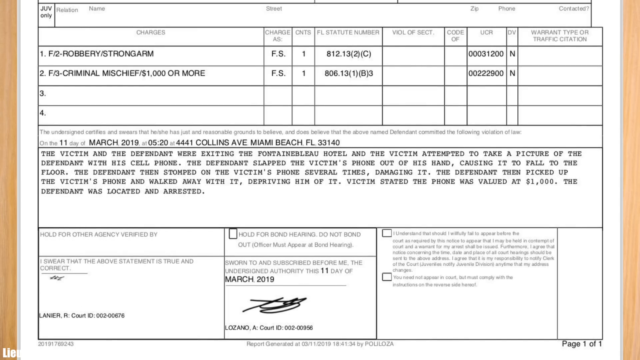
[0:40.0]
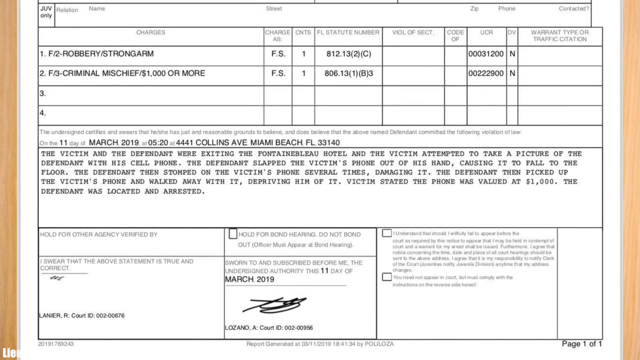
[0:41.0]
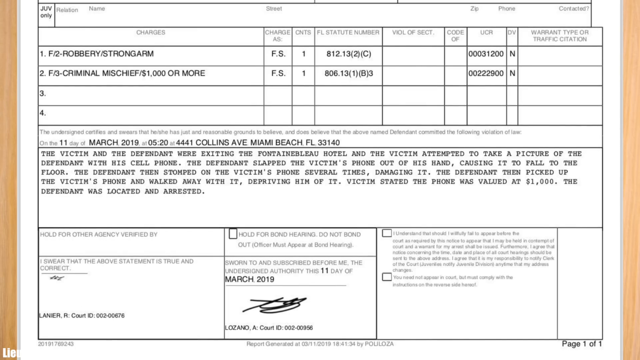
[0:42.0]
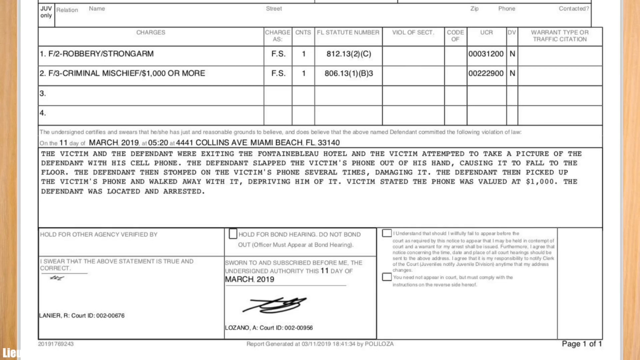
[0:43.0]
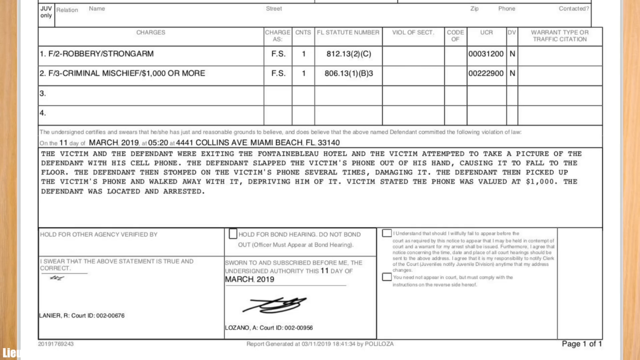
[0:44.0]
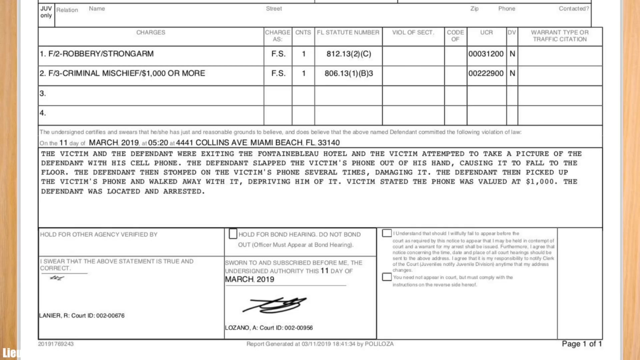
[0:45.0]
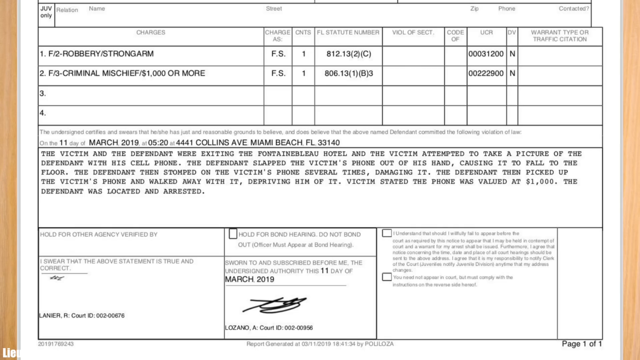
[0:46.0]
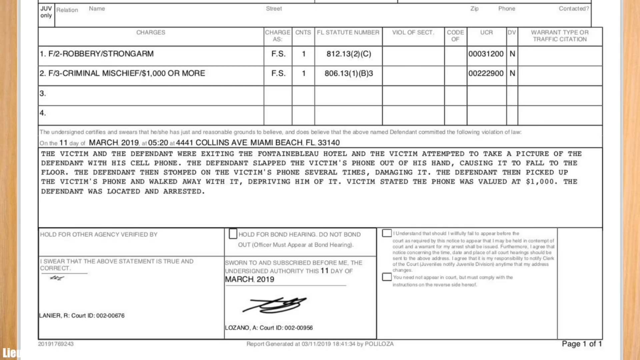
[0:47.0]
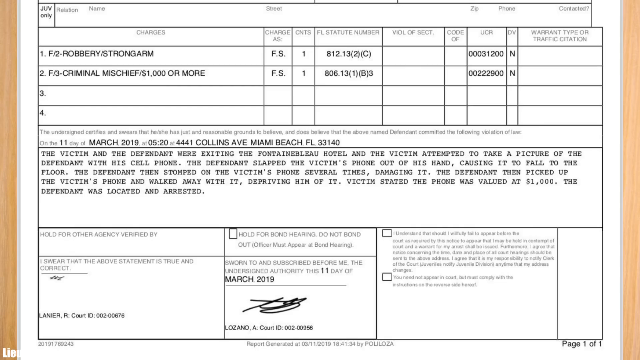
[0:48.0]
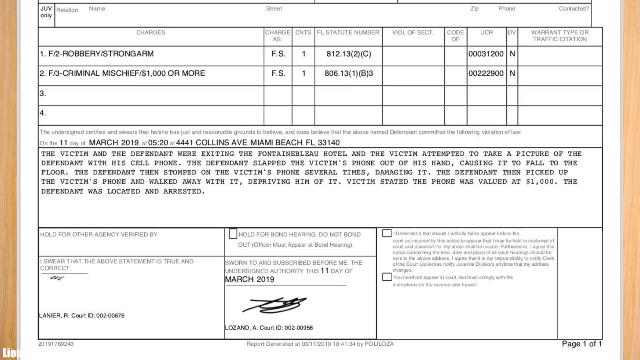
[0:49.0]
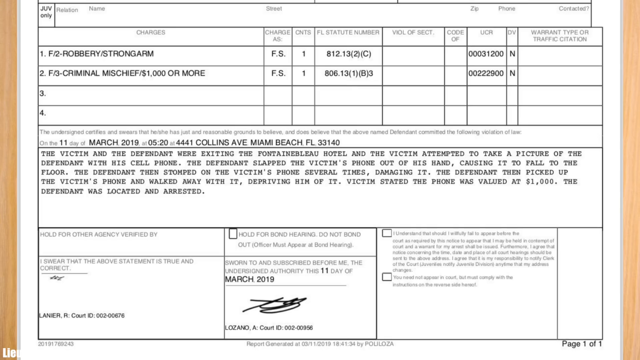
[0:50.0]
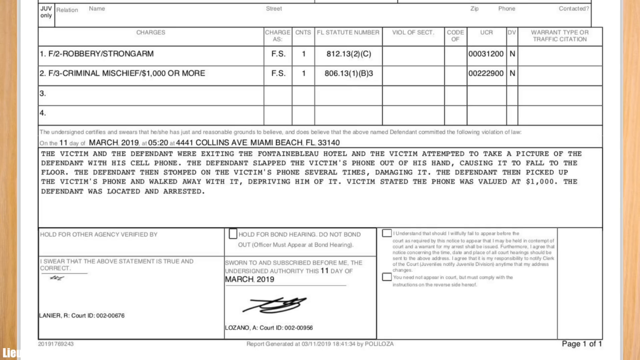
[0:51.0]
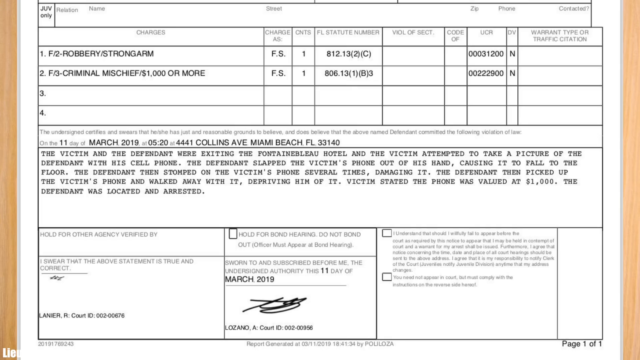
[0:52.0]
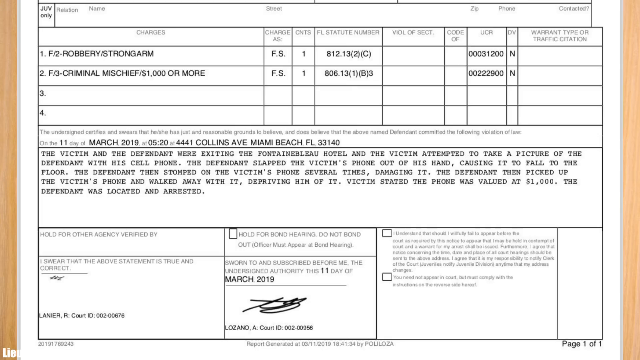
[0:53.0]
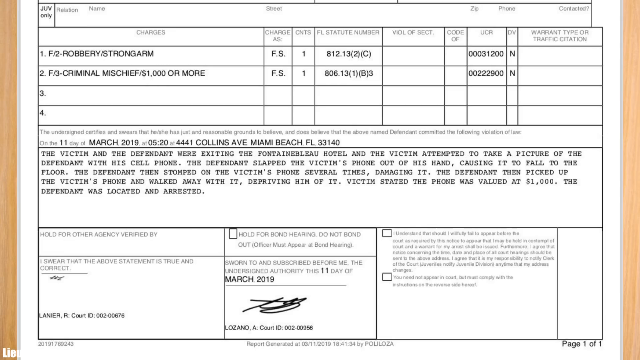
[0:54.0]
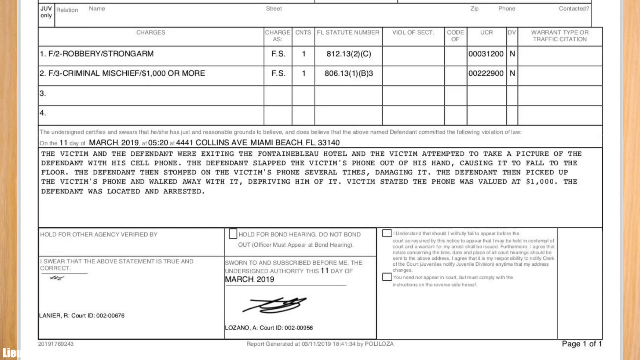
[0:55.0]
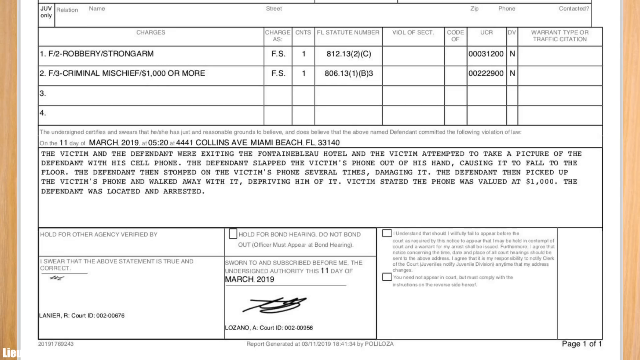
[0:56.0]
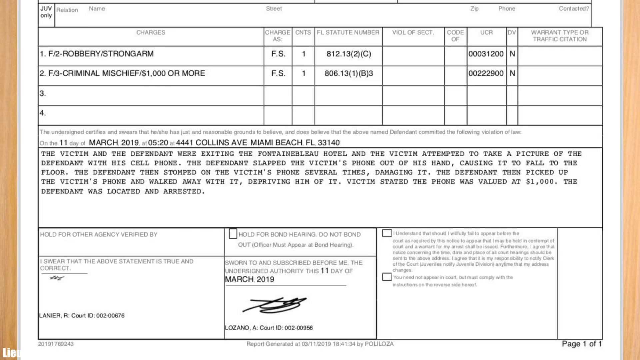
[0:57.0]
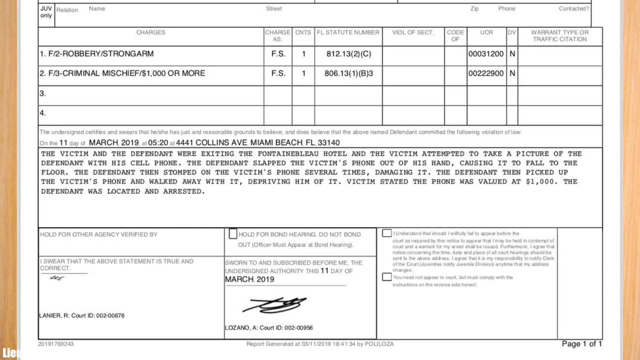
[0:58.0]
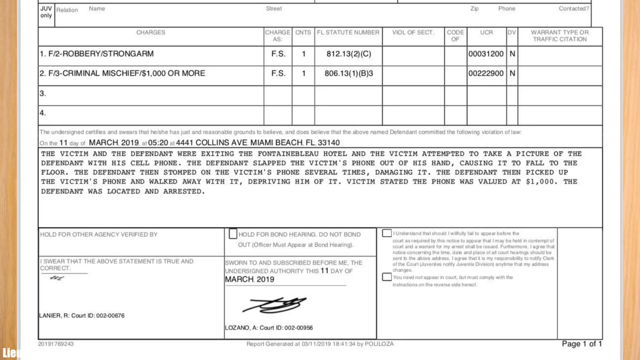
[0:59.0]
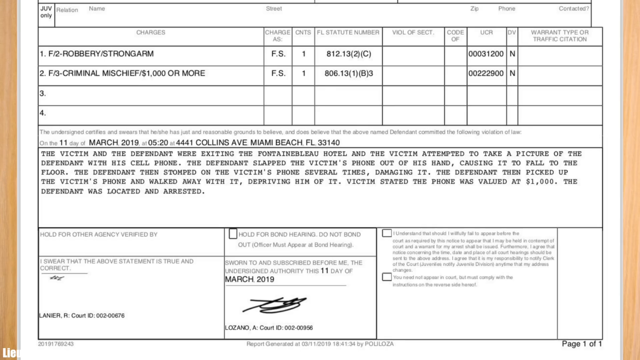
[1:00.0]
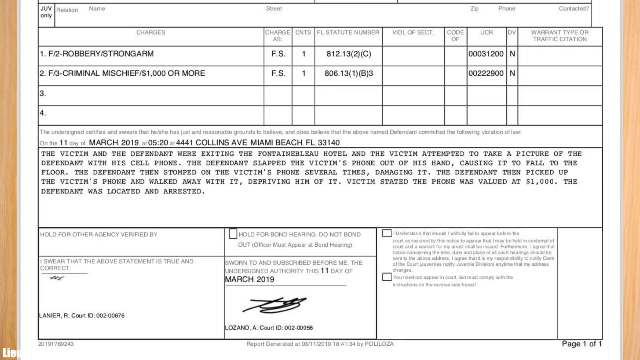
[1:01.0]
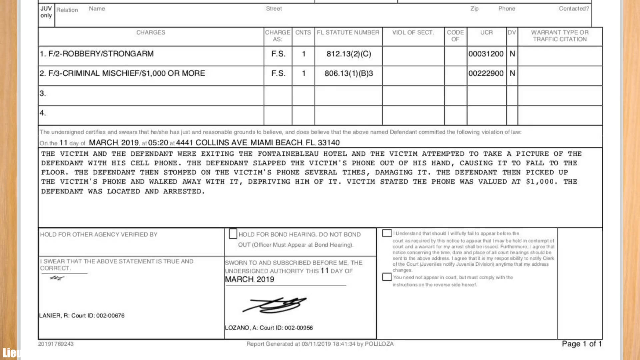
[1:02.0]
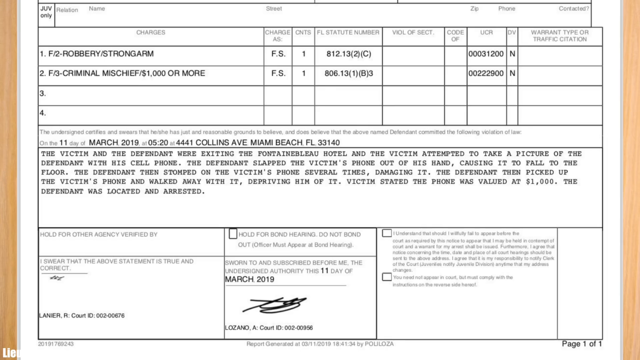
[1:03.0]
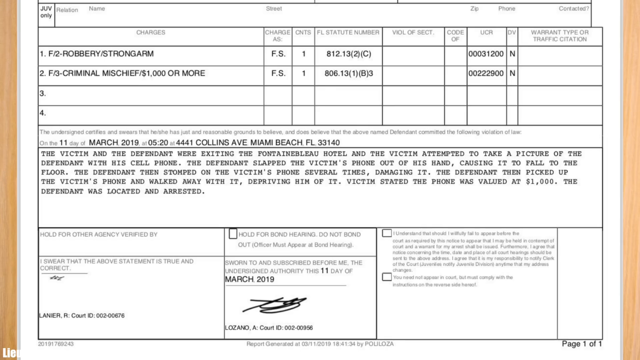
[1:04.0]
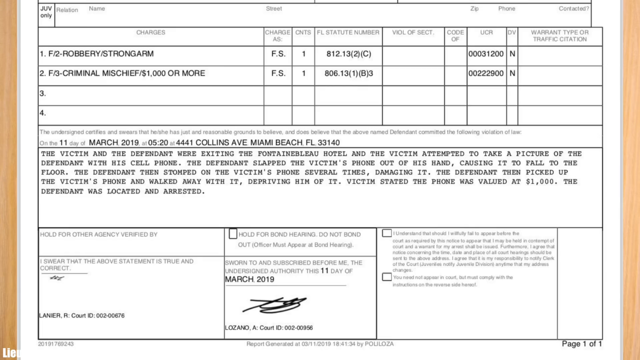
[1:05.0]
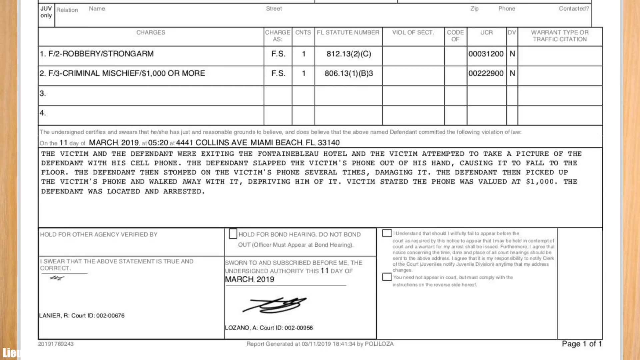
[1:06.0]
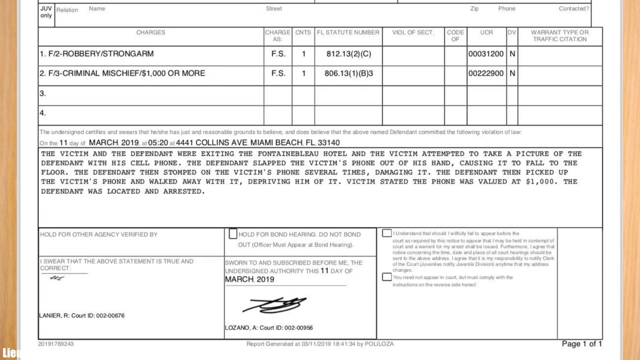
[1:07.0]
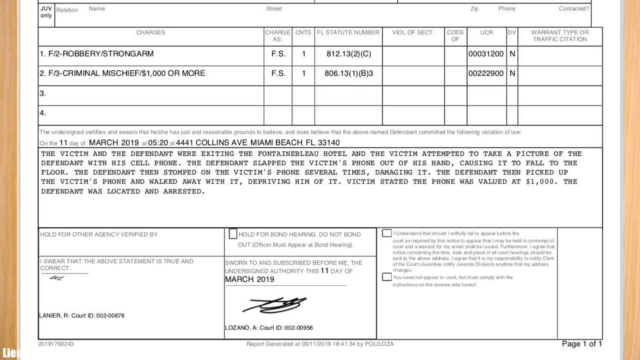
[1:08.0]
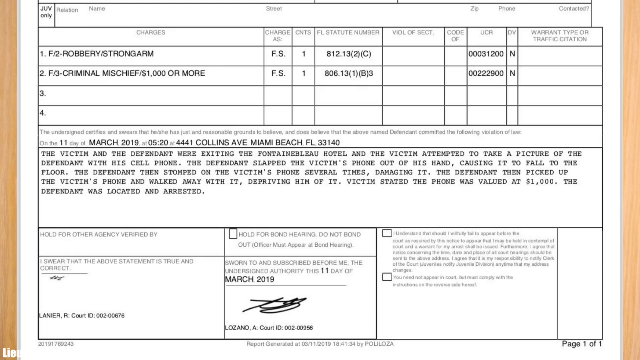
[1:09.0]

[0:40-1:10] The charge sheet lists two counts of charges: "robbery strong arm" and "criminal mischief / one thousand or more." The date 11th March 2019 and "Collins Avenue" are written on it. The written account states that the victim and the defendant were exiting a hotel, and the victim attempted to take a picture of the defendant with his cell phone. The defendant slapped the phone out of the victim's hand, causing it to fall to the floor, stomped on it several times, damaging it, then picked up the phone and walked away with it, depriving the victim of it. The victim stated the phone was valued at $1,000, and the defendant was located and arrested.